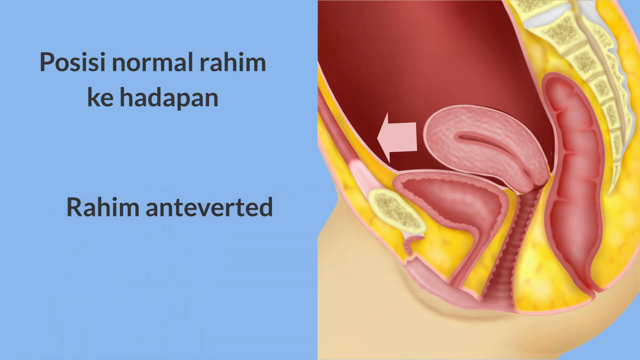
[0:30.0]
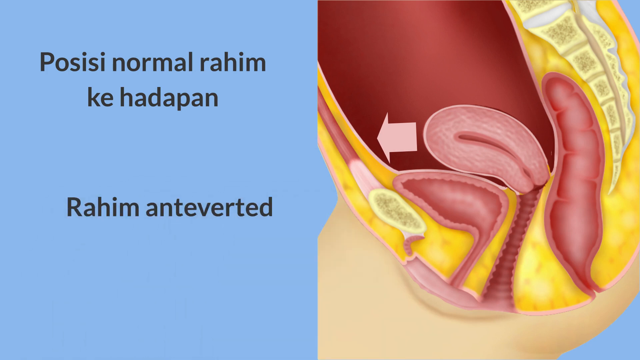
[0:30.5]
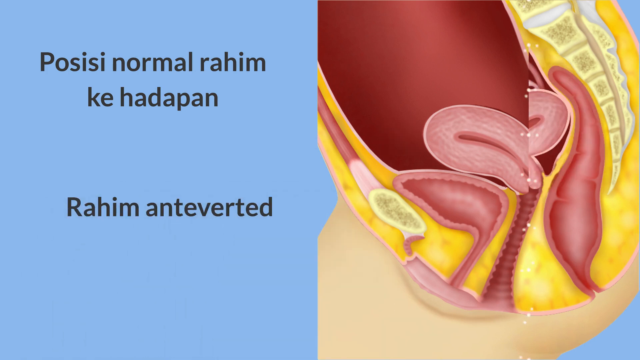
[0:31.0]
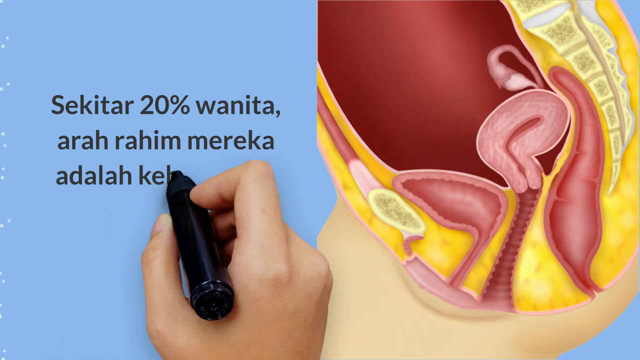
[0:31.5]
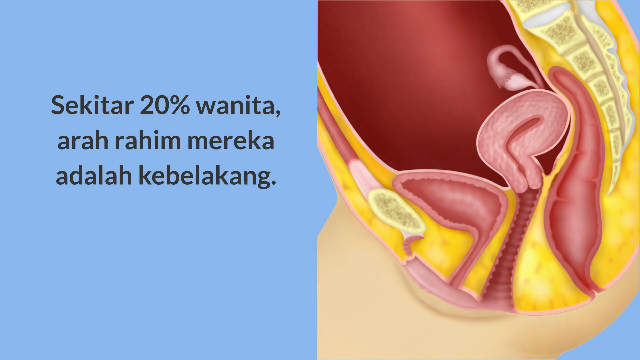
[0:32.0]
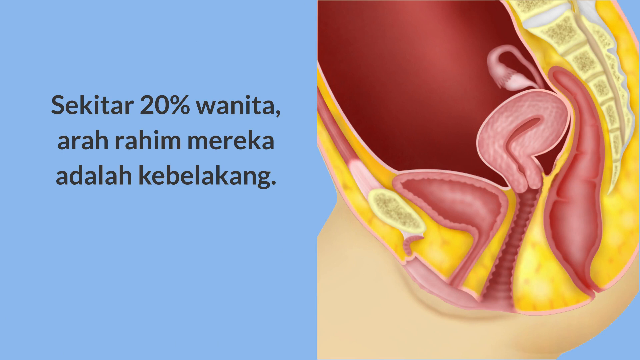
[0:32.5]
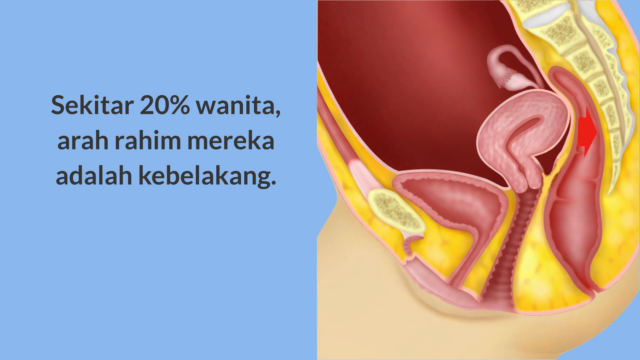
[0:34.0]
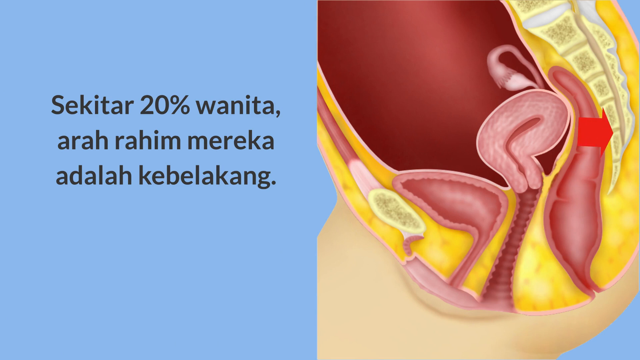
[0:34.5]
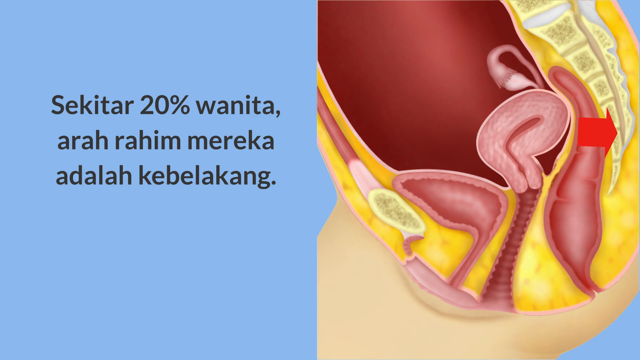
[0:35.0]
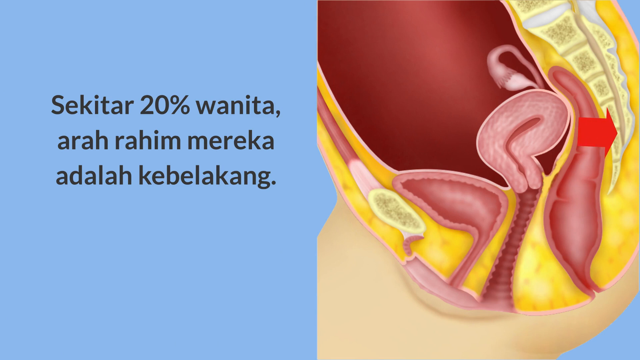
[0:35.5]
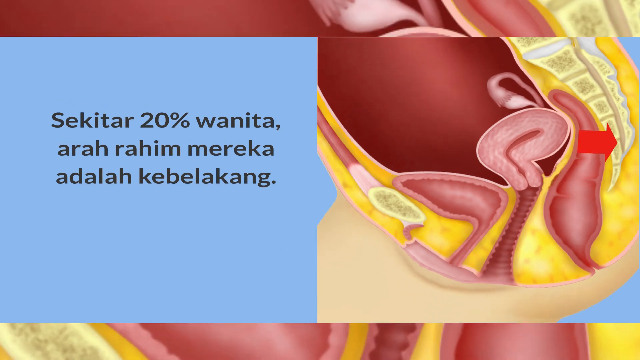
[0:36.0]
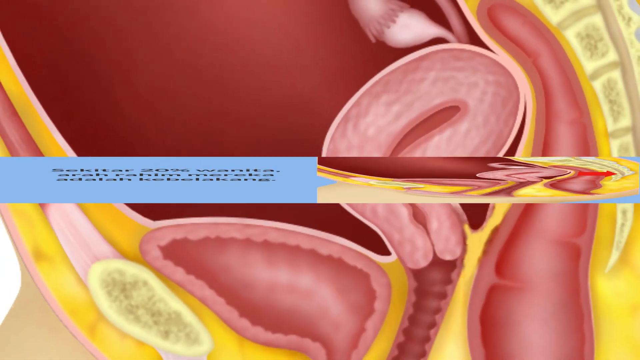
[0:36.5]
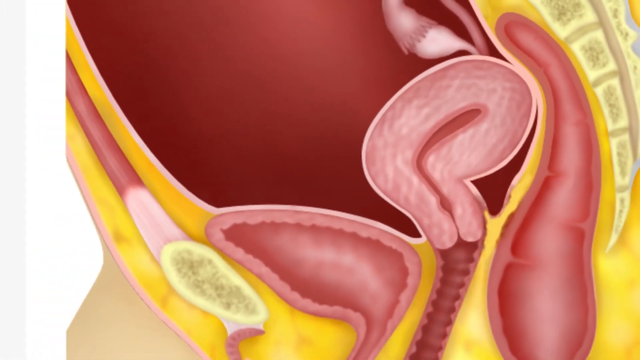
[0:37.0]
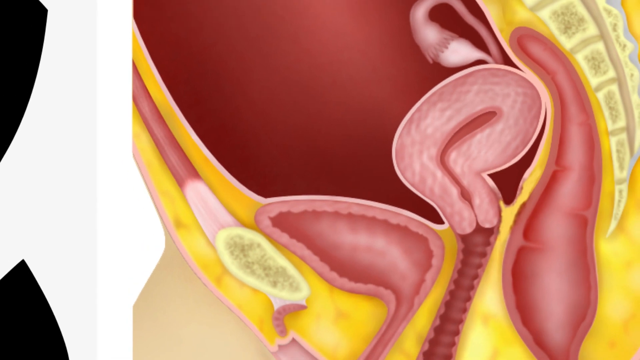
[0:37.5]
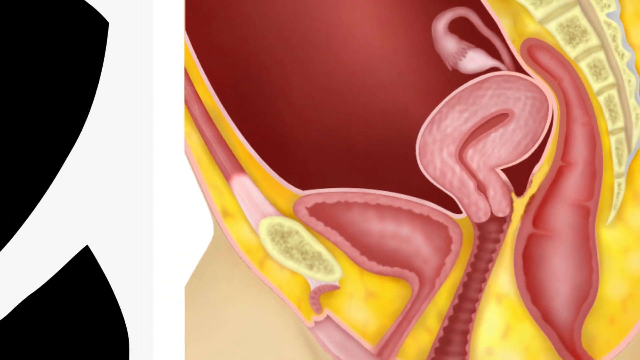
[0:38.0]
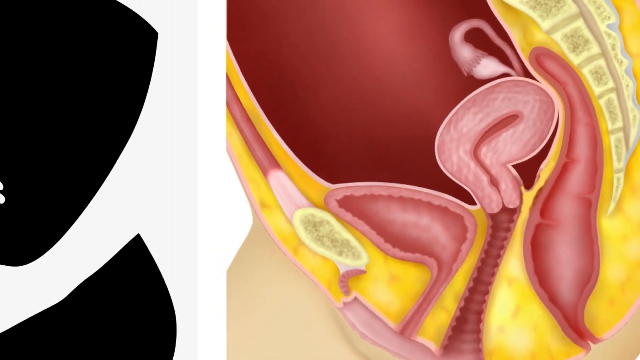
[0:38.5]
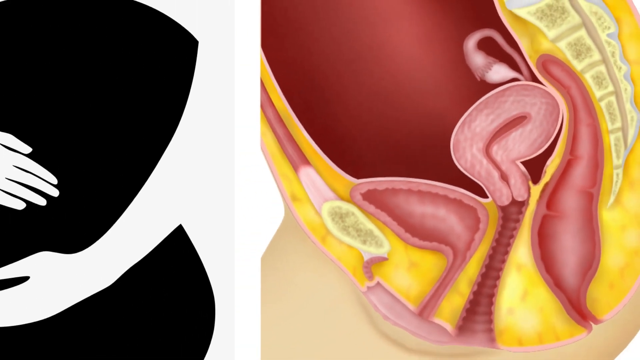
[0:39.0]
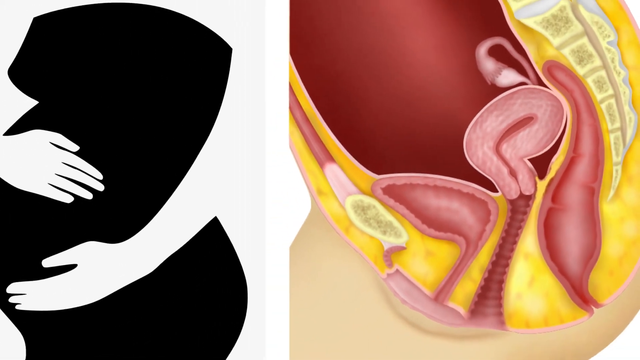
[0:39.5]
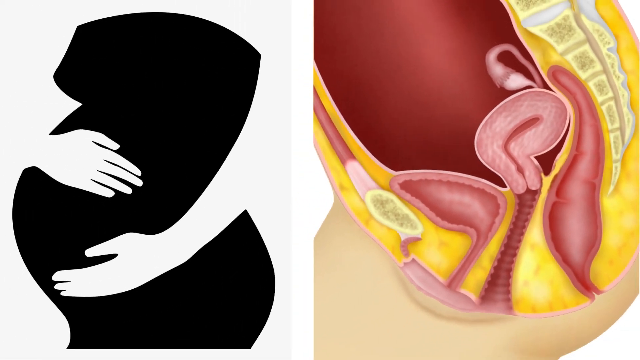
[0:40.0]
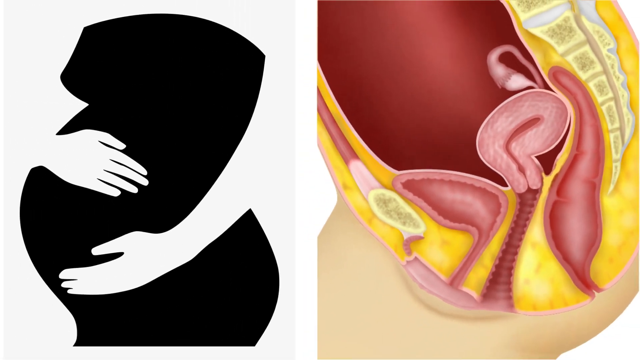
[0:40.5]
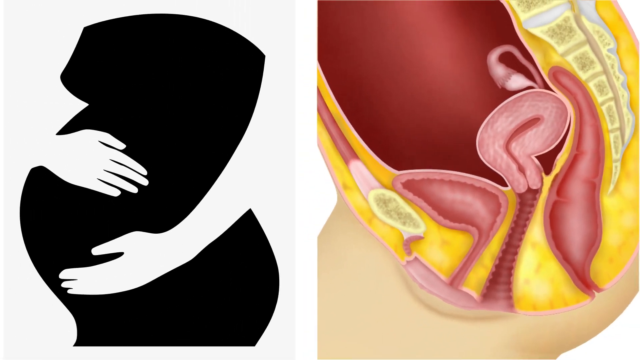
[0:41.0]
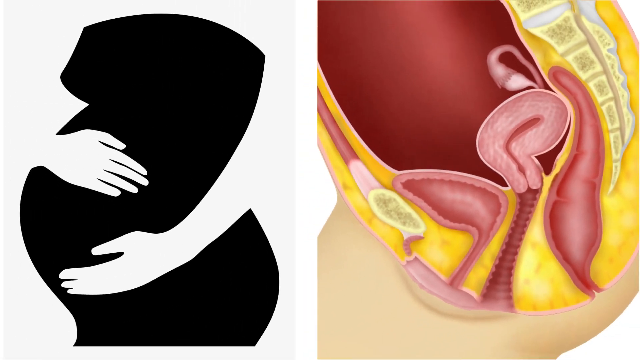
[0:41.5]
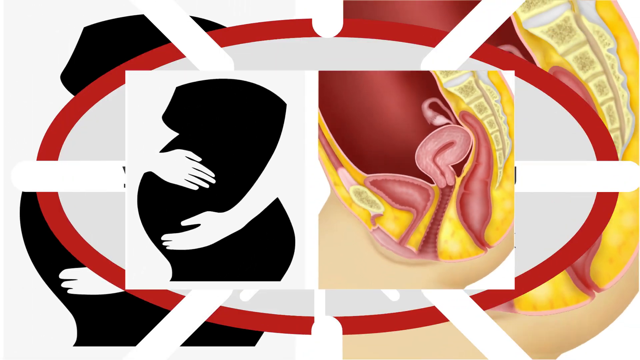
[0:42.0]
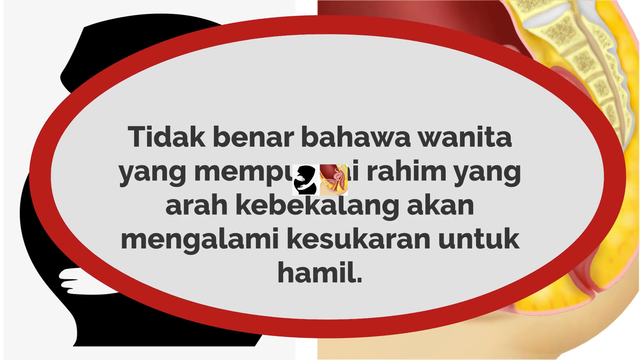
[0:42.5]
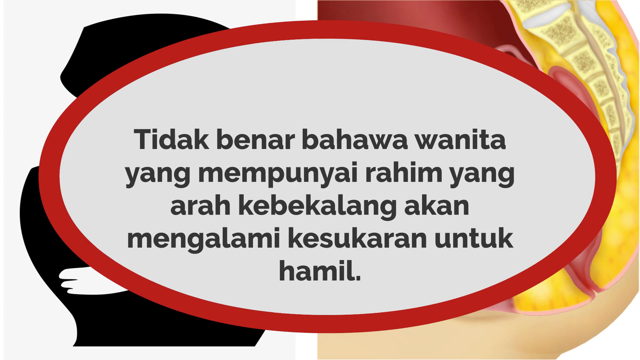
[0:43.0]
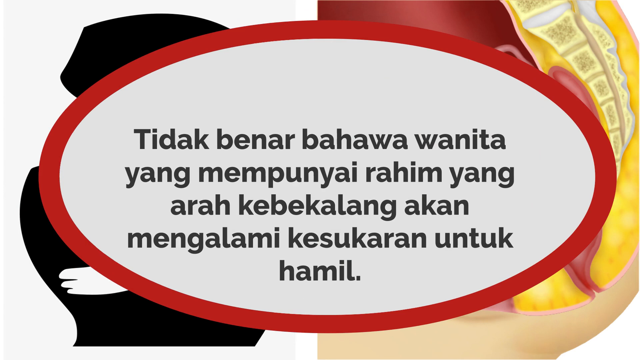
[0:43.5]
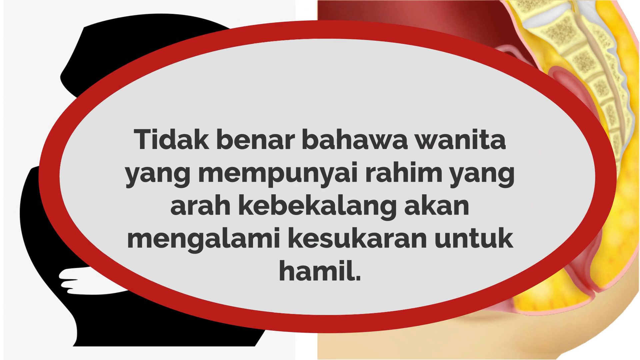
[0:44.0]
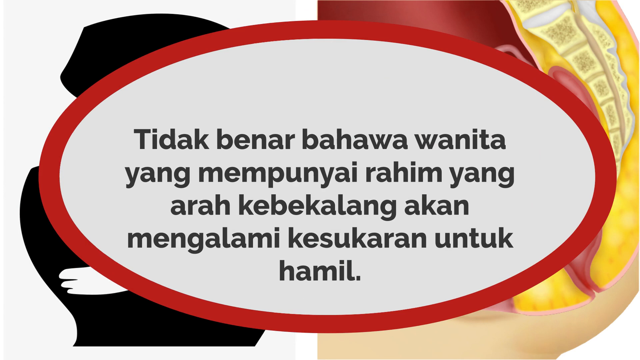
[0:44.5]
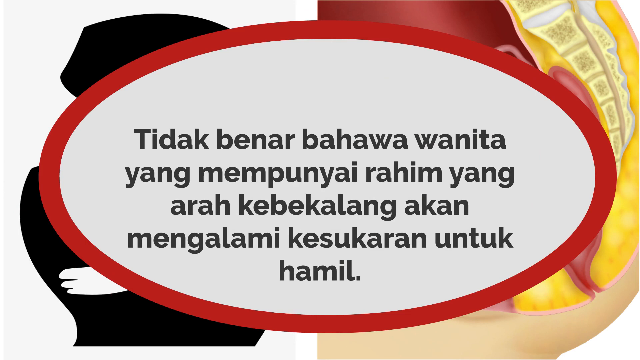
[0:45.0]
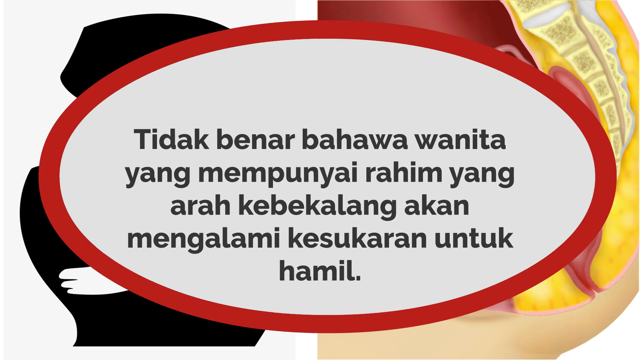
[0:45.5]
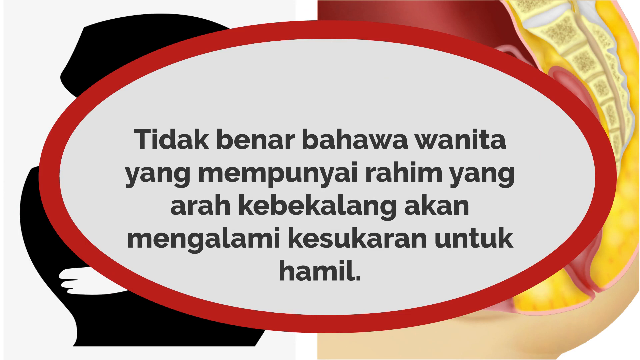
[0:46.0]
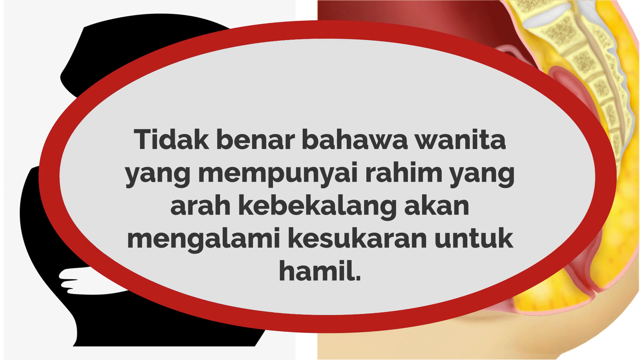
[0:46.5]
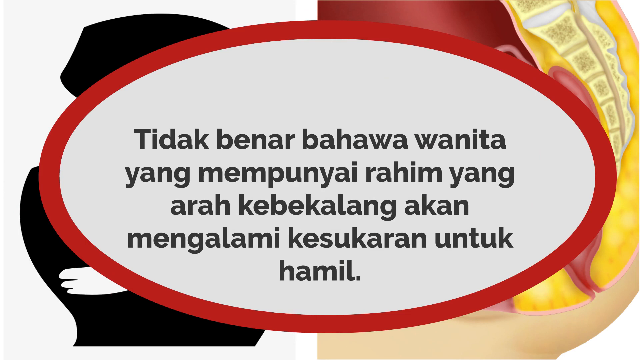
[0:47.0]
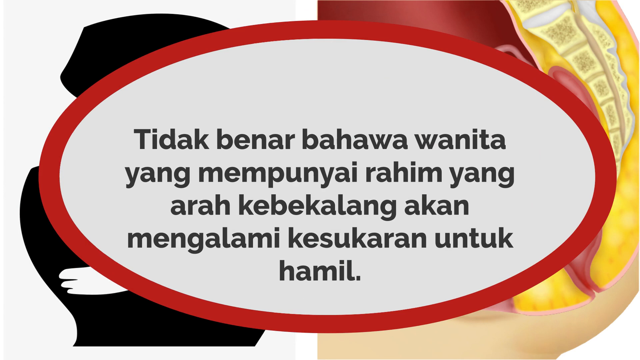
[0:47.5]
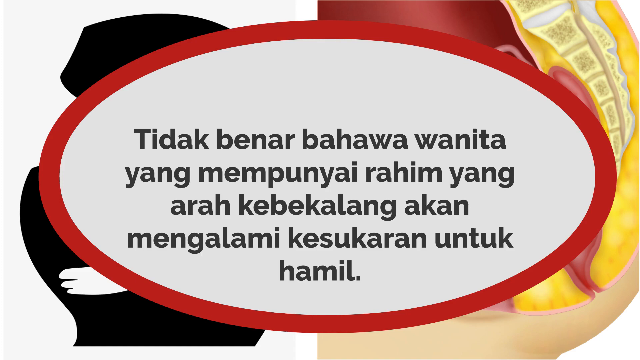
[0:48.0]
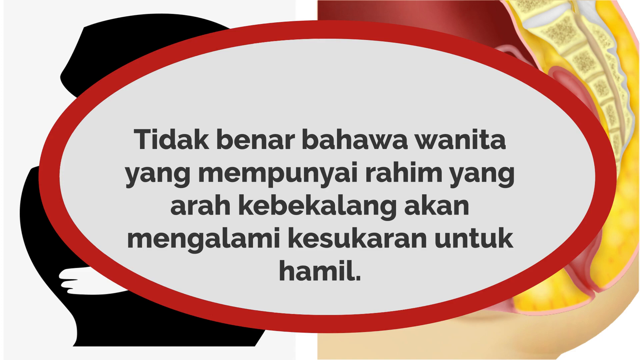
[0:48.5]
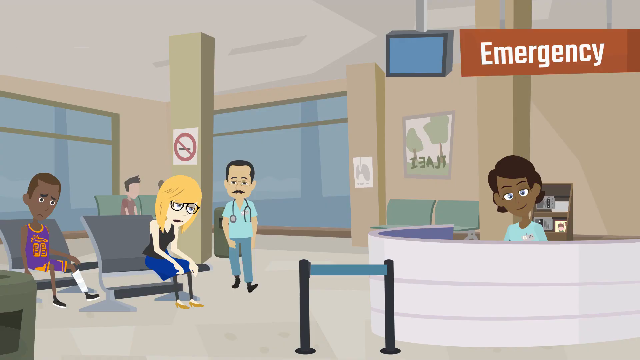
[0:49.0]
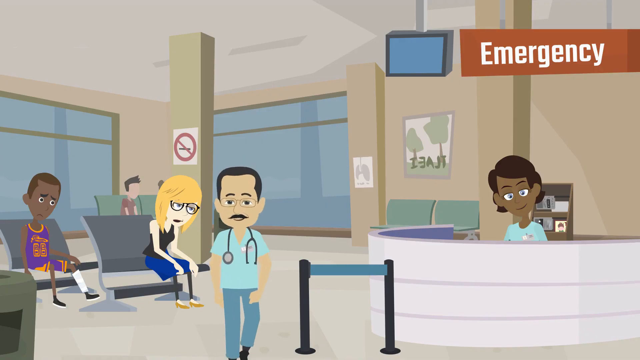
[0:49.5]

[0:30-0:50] The next screen shows a caricature-like picture of a uterus, with blue on the left and black writing. An arrow pushes one way and then a red arrow pushes to the right, seemingly about a uterus being introverted or something like that. A close-up of the uterus follows as it comes in on the screen, with a pregnant woman on the left-hand side, shown as just a body, wearing what looks like a black dress. Then a red circle covers the whole screen, with black writing, and stays on the screen for a while. The video moves to a new screen that looks like an emergency room, where the doctor comes out, kind of running. He wears a stethoscope, has dark hair, and wears what look like light blue scrubs. Sick people are sitting in the emergency room.